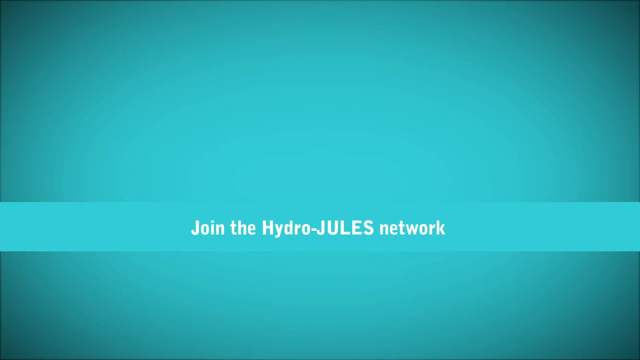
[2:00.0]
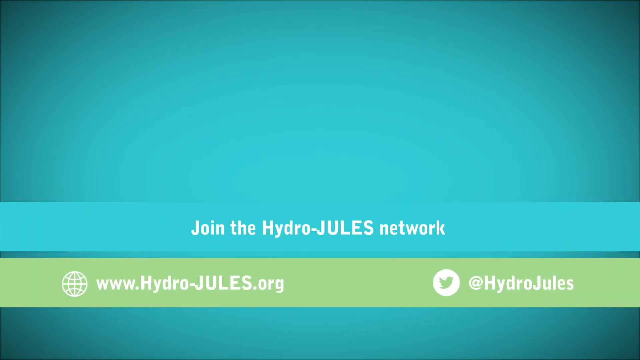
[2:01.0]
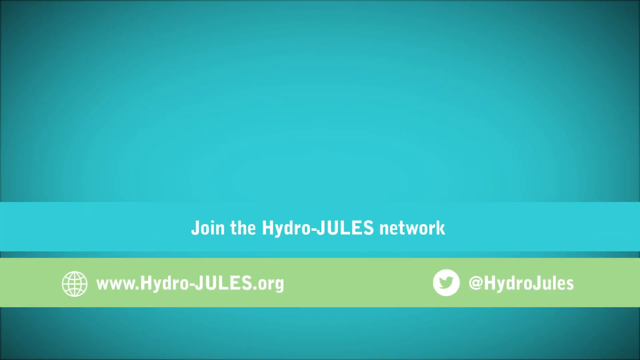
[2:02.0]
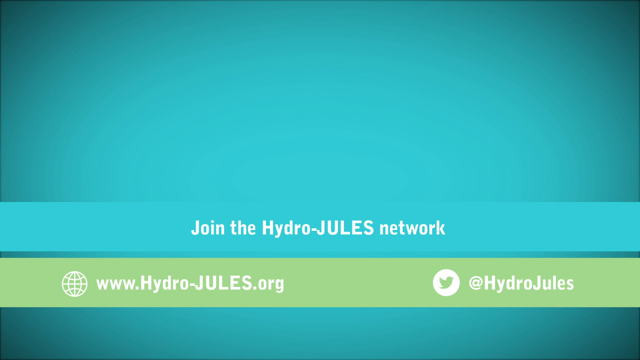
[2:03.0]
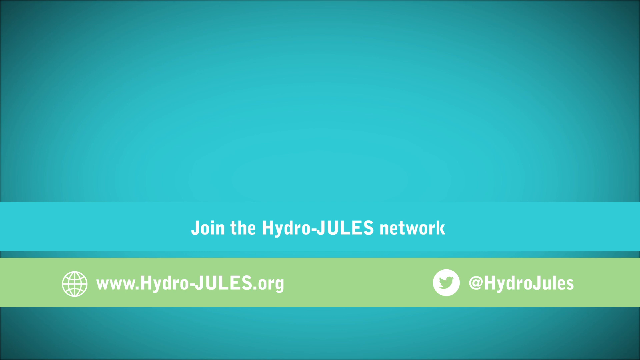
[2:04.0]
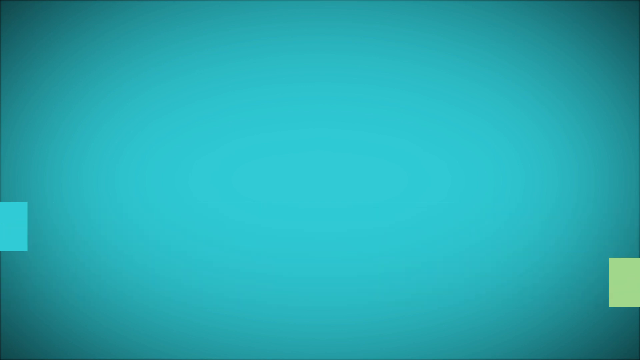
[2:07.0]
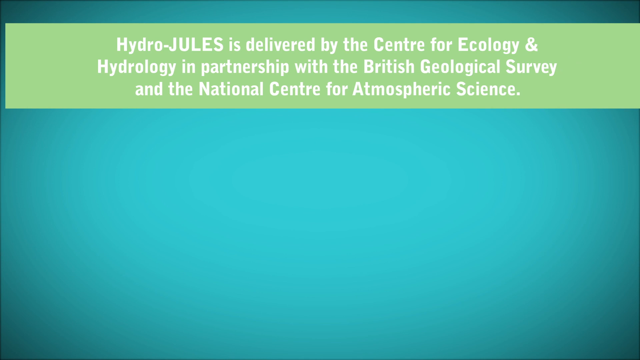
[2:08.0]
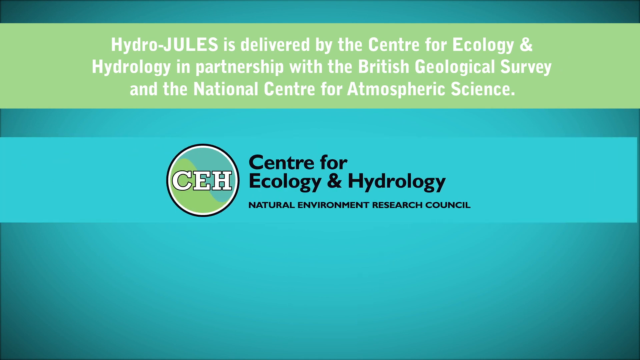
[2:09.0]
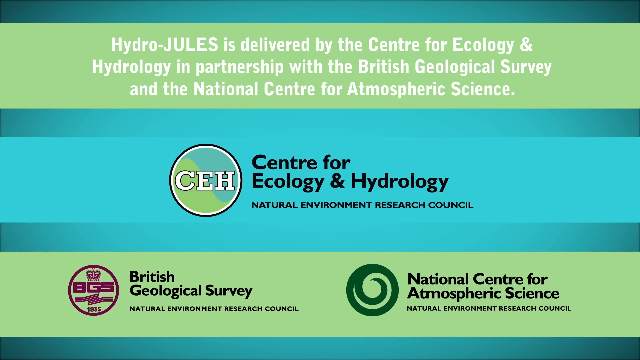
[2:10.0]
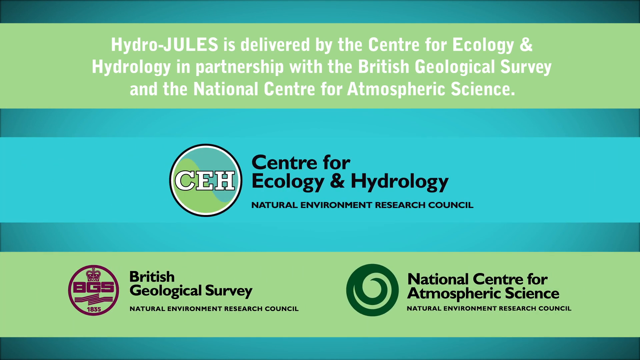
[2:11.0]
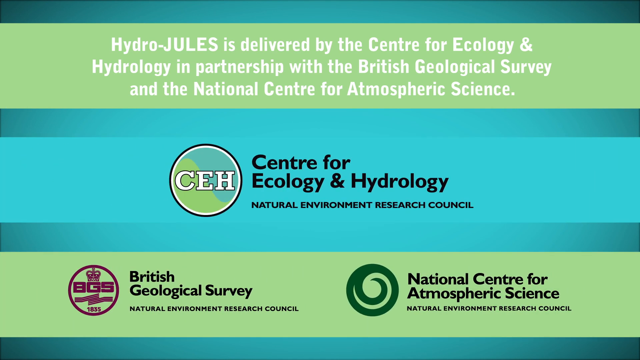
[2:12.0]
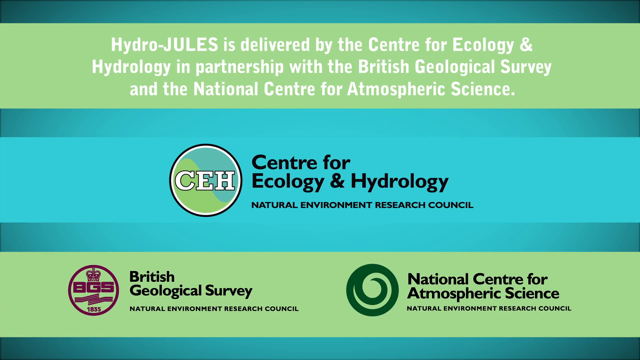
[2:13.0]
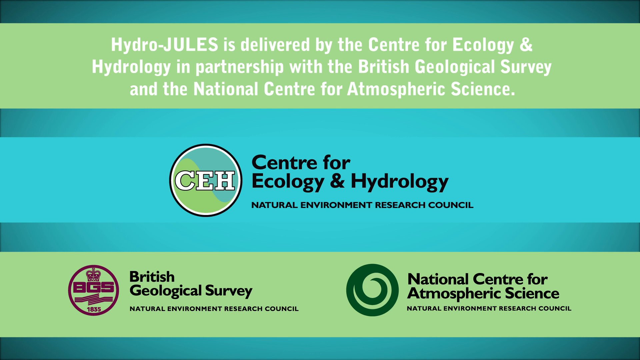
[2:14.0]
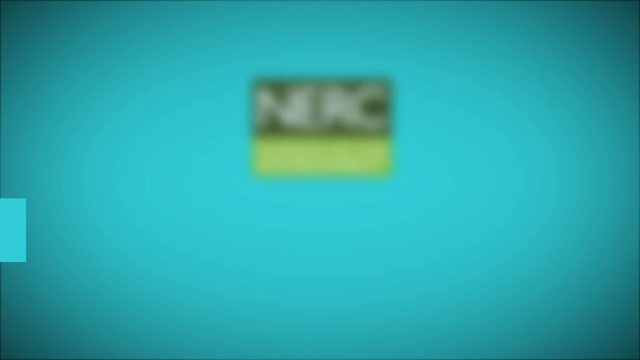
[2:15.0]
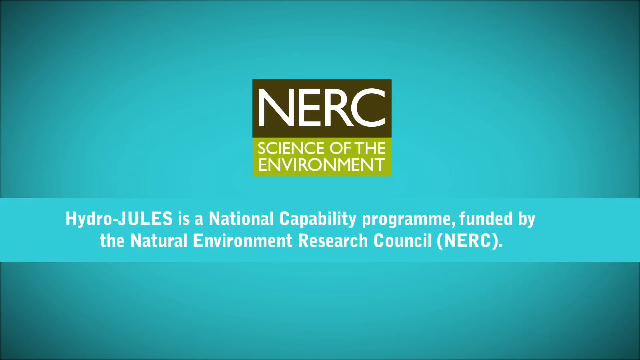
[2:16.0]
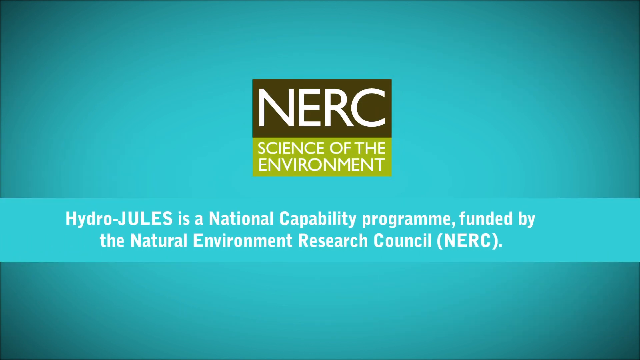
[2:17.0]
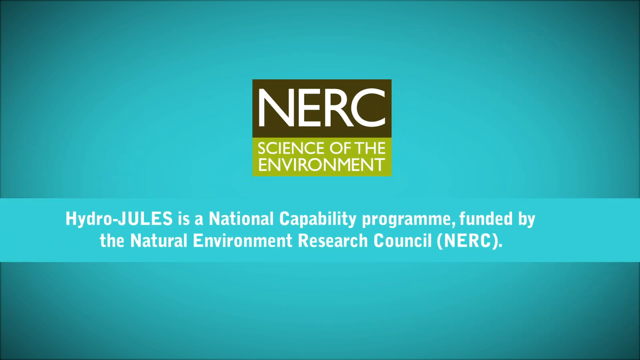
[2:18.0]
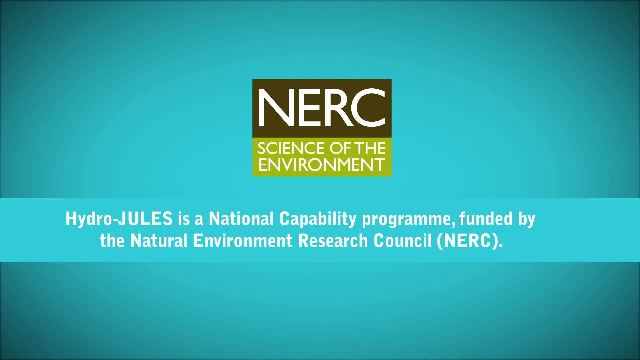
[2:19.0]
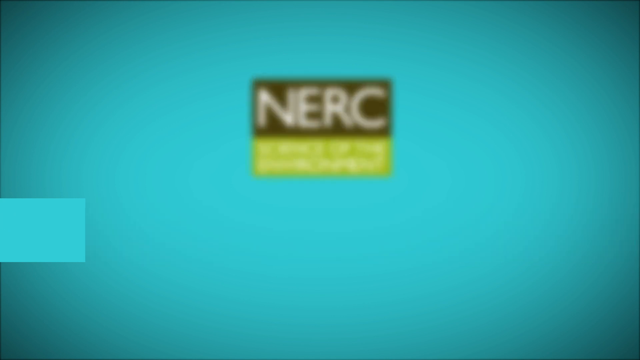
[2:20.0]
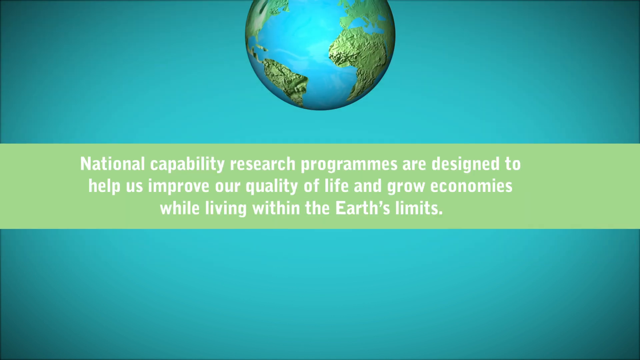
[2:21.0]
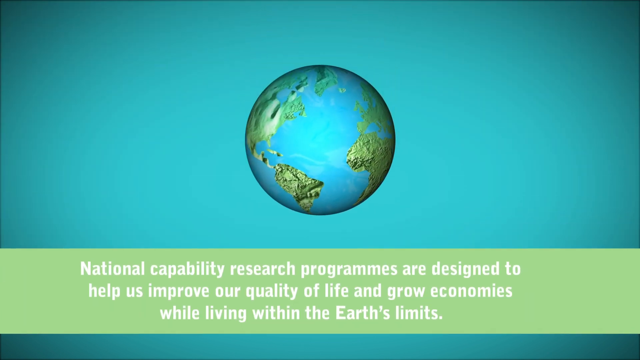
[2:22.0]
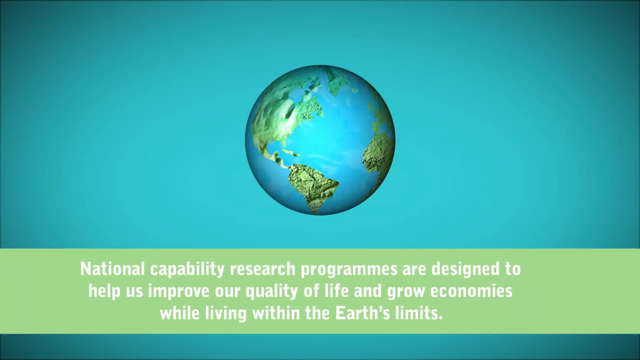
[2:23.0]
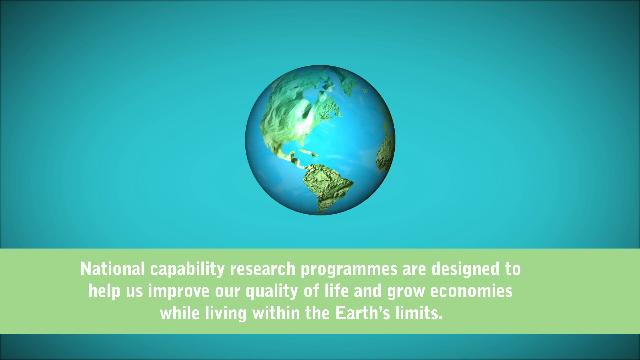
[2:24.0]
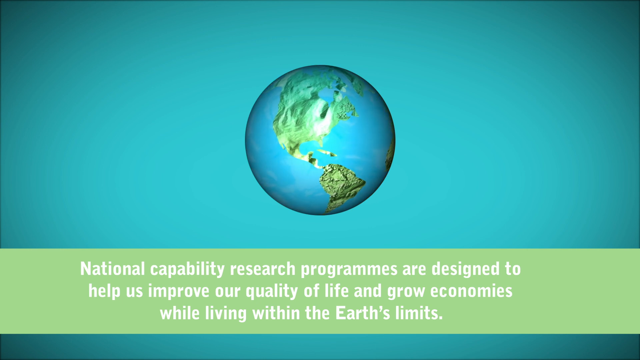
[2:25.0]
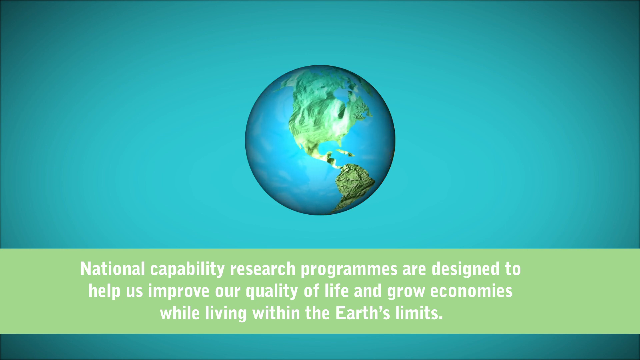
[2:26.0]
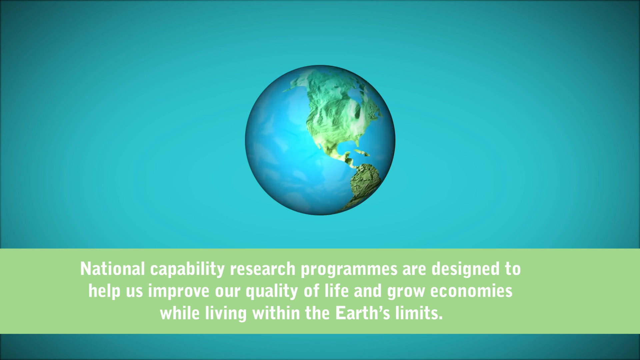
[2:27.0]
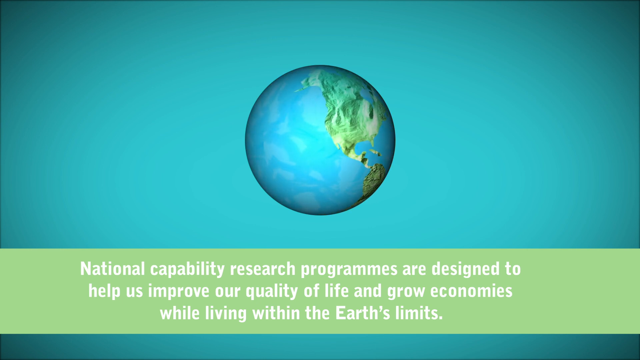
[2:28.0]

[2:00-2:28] On a blue background, a lighter blue banner appears with white letters reading "Join the Hydro-JULES network". A green banner then slides in from the left below it, showing a picture of a globe and the website "www.hydro-jules.org", with a Twitter symbol and "@HYDROJULES" on the right. In the next scene, three banners appear from the top down, moving right to left, then left to right, then right to left. The top one is green and reads "Hydro-JULES is delivered by the Center for Ecology and Hydrology in partnership with the British Geological Survey and the National Center for Atmospheric Science". The middle one is a blue banner with black letters showing the CEH symbol and "Center for Ecology and Hydrology, Natural Environment Research Council". The bottom one is a green banner with the logos of the British Geological Society, Natural Environment Research Council, and the National Center for Atmospheric Science, National Environment Research Council. Next comes an NERC logo: the top half is a brown square reading "NERC", and below it, in green with white letters, "Science of the Environment". A blue banner below reads "Hydro-JULES is a national capability program funded by the National Environment Research Council (NERC)". Finally, a picture appears from the top down: a spinning globe in the middle of the screen, with a green banner below reading "National Capability Research Programs are designed to help us improve our quality of life and grow economies while living within the Earth's limits".